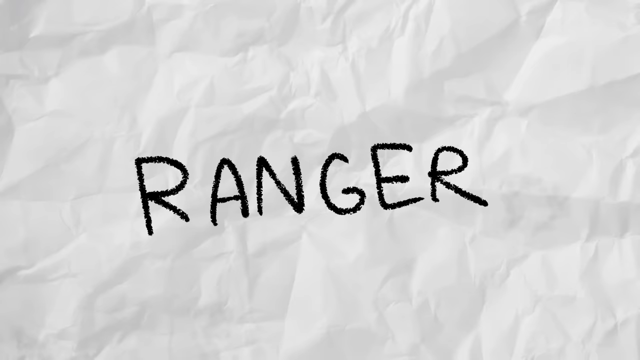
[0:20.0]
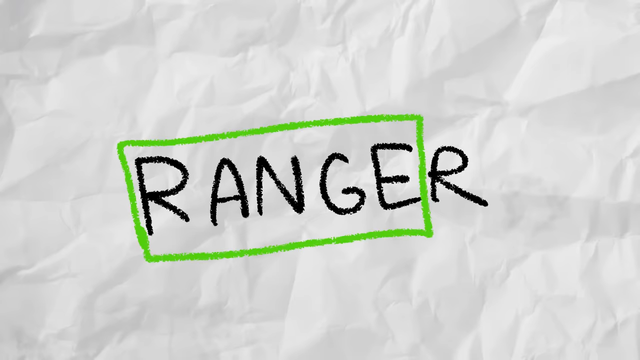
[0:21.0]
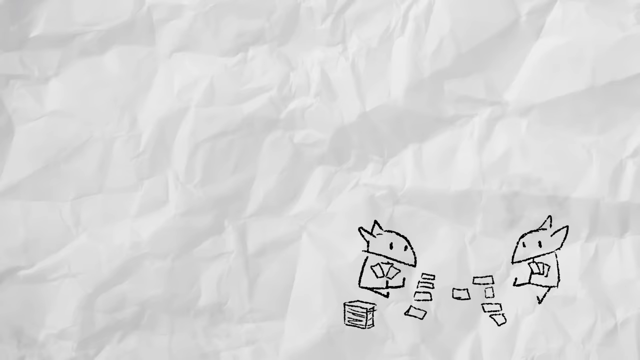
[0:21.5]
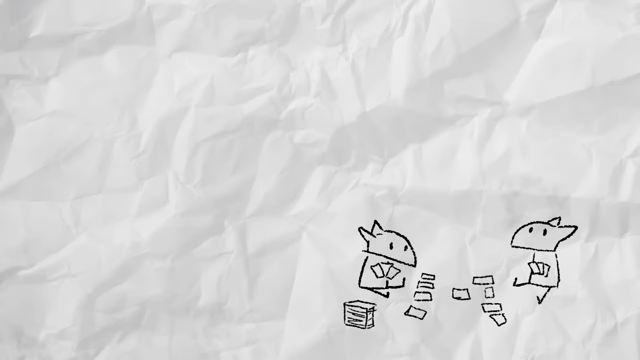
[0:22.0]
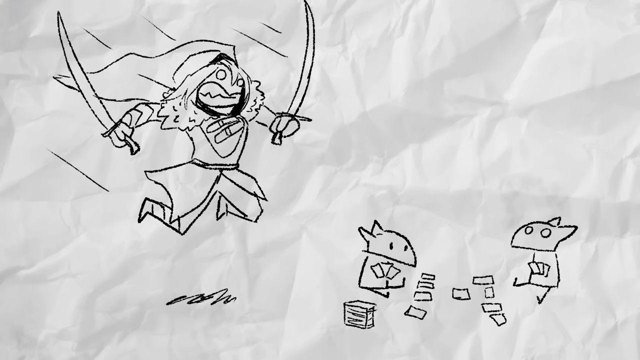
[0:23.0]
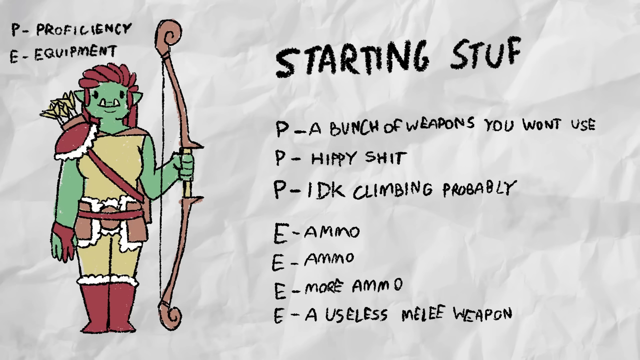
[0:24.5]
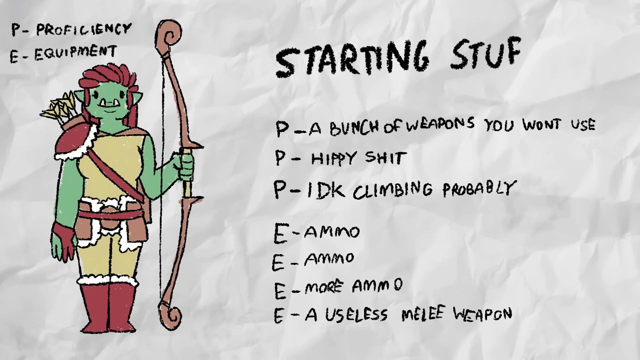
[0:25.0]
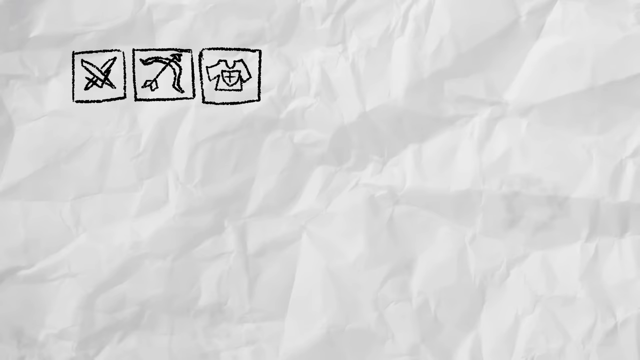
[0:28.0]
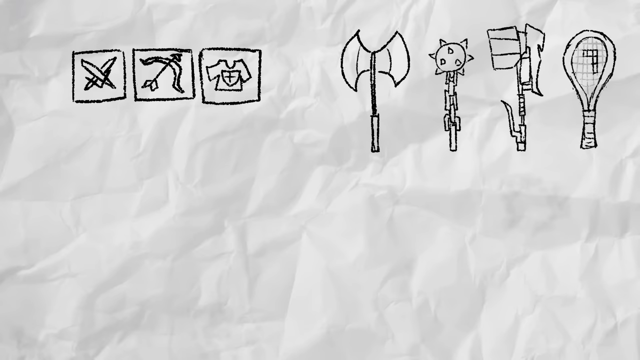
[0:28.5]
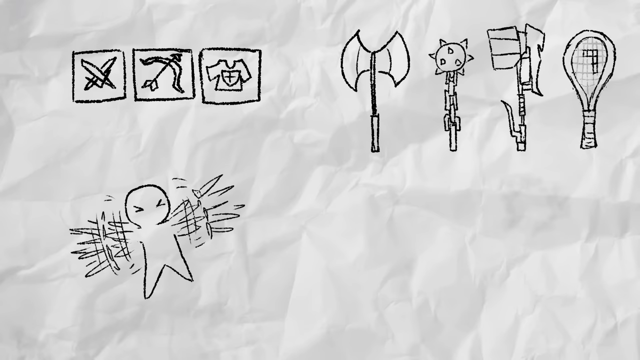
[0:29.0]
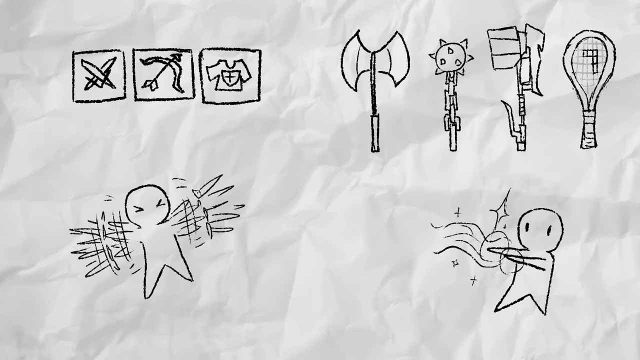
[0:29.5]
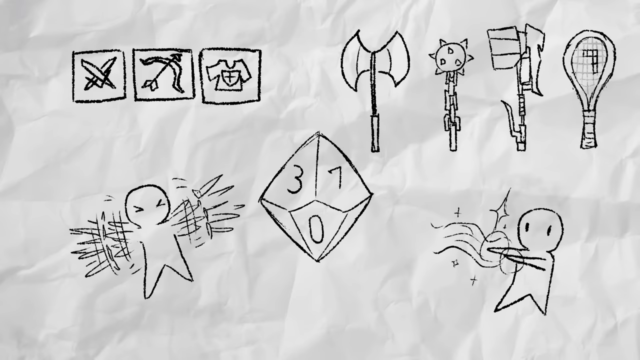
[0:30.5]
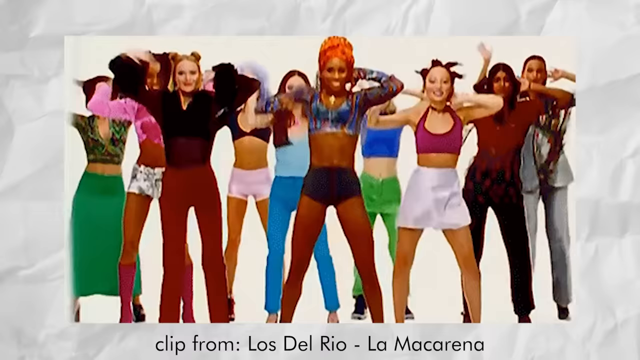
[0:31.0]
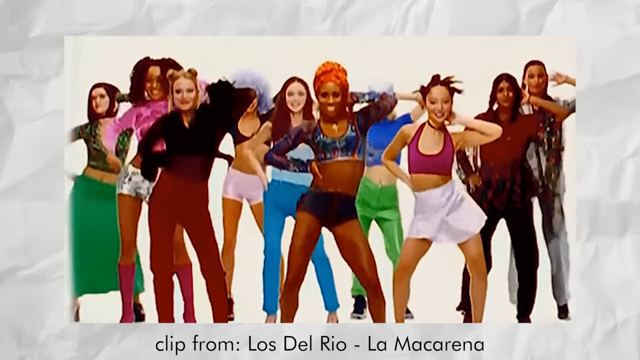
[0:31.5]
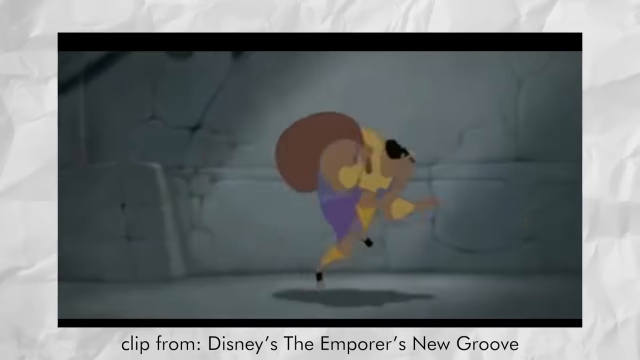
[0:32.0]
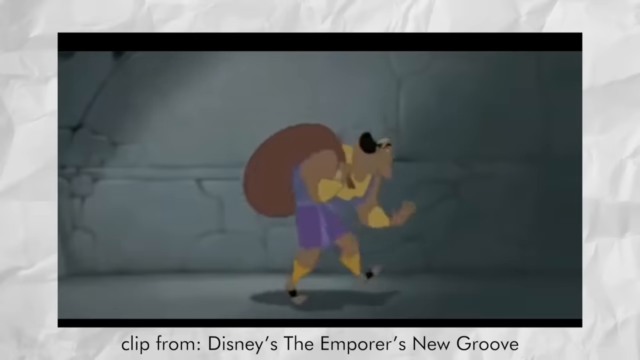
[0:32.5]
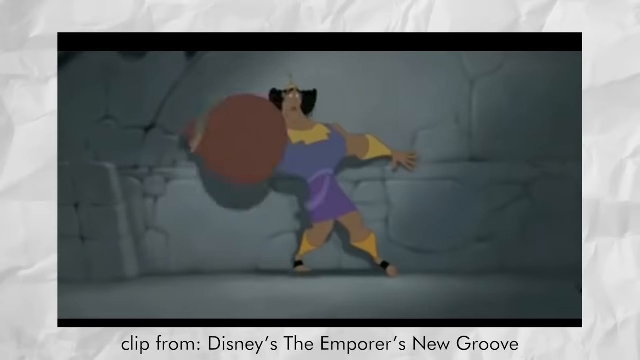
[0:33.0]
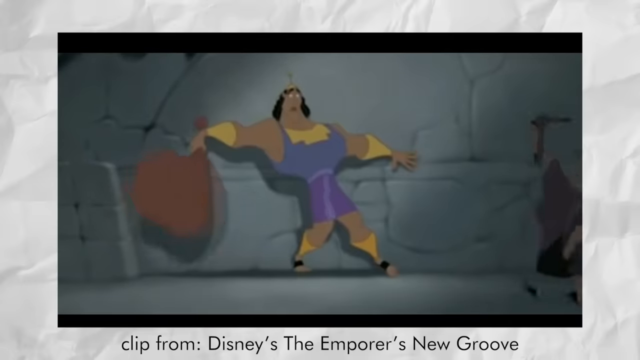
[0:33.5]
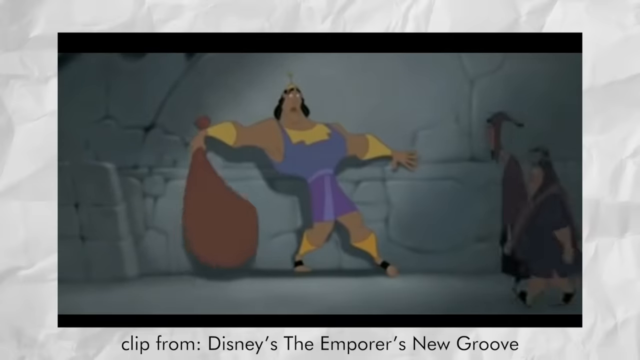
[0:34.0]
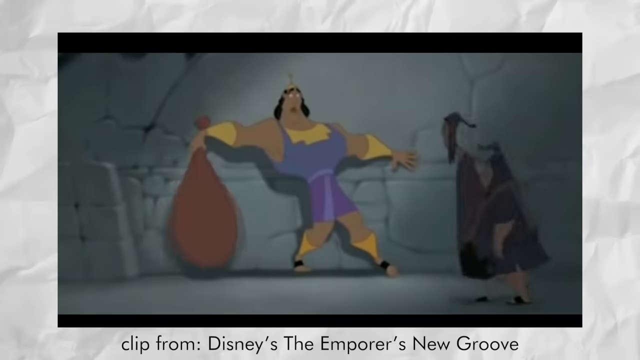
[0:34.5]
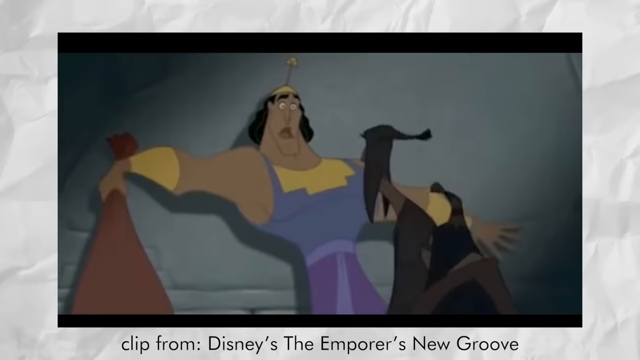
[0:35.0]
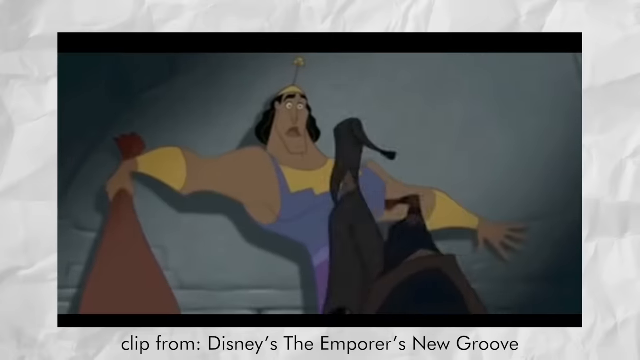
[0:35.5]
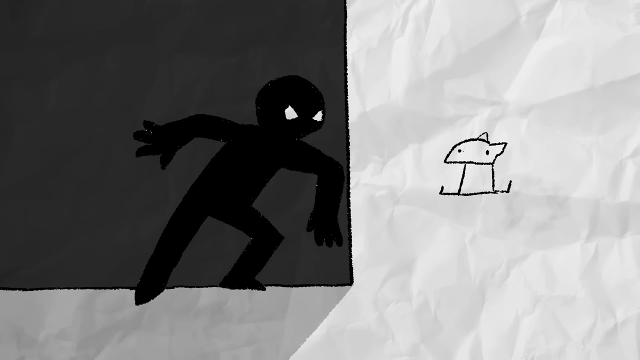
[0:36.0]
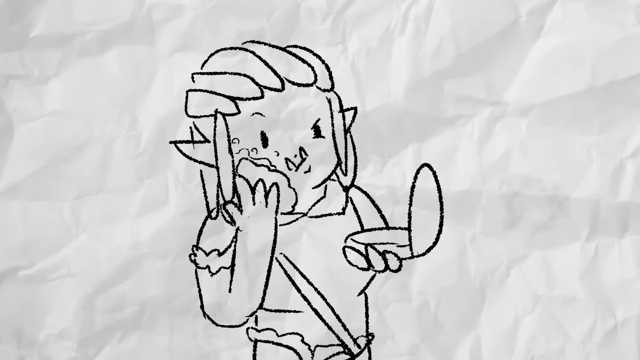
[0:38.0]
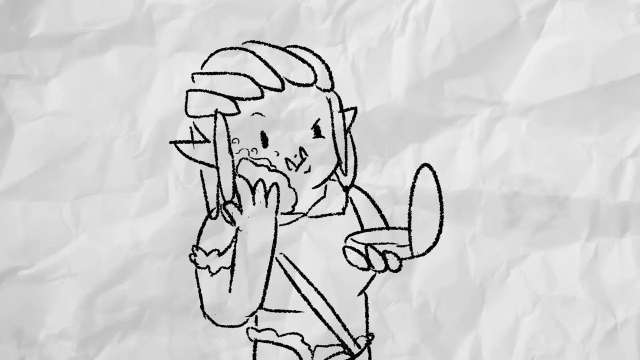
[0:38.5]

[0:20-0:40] The word "ranger" appears in black writing on a white crumpled paper, with a green rectangle circled over it. It cuts to two little children, drawn in black colored pencil and animated, sitting down. They look like mice, hold cards in their hands, and have cards placed in front of them, with a deck to the right of the left one. As they play, a person wearing a cape and a hoodie and holding two swords jumps very fast towards them. As the person jumps towards the two kids on the ground, one of the kids' eyes pop out of their head in surprise. It then cuts to an image of somebody holding a bow and arrow.